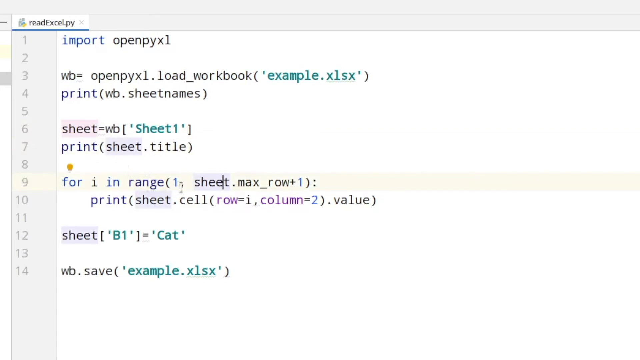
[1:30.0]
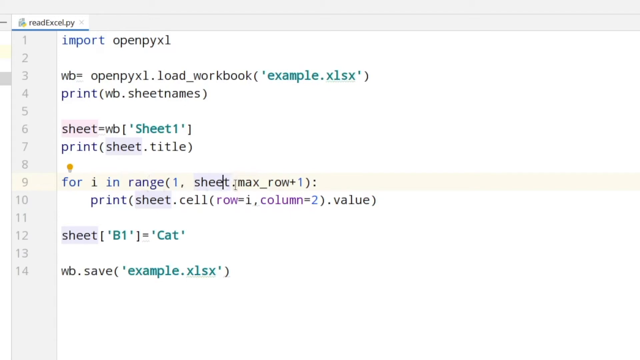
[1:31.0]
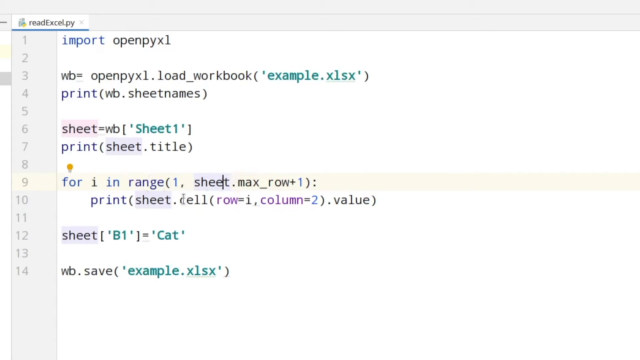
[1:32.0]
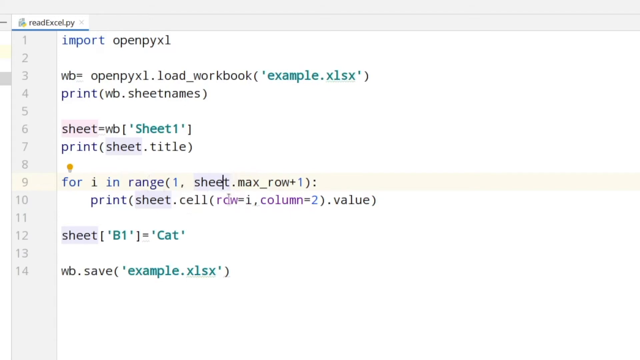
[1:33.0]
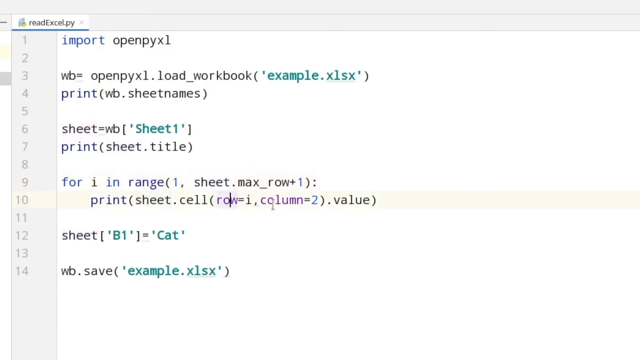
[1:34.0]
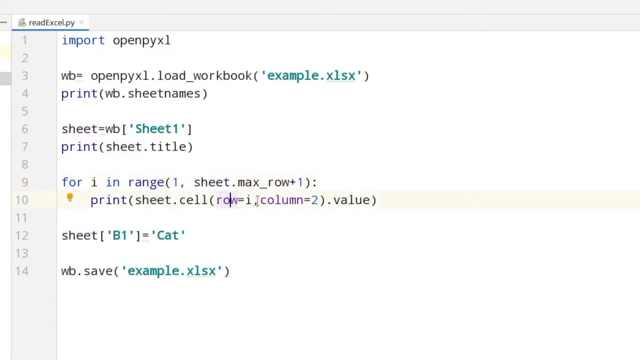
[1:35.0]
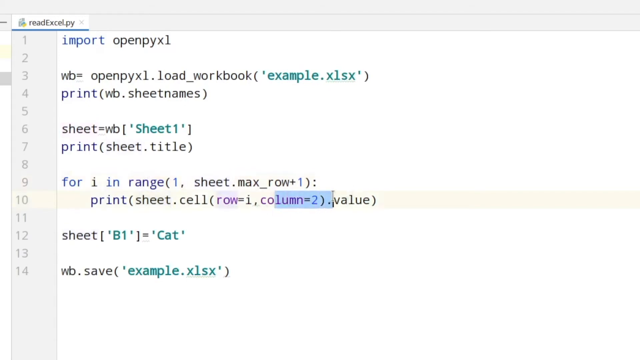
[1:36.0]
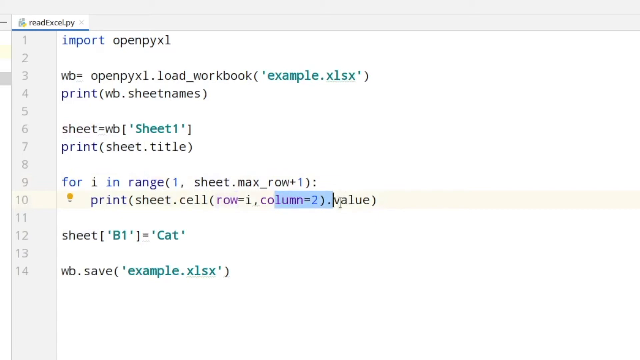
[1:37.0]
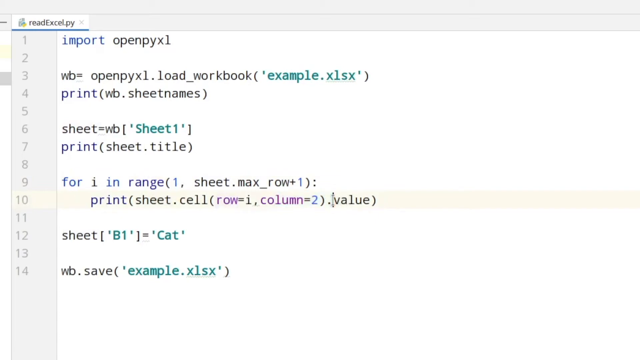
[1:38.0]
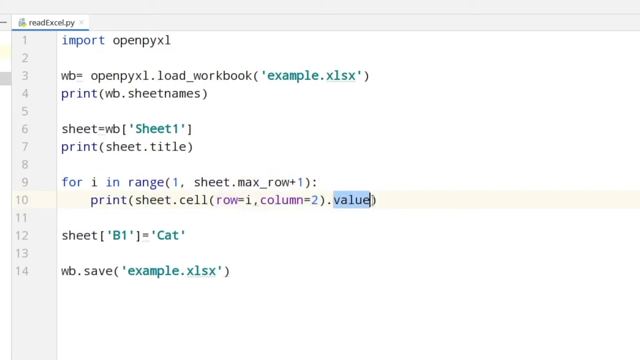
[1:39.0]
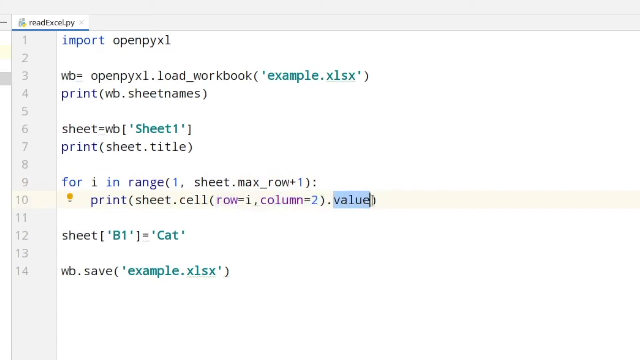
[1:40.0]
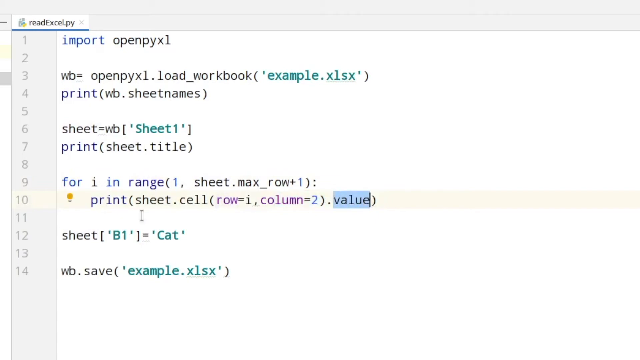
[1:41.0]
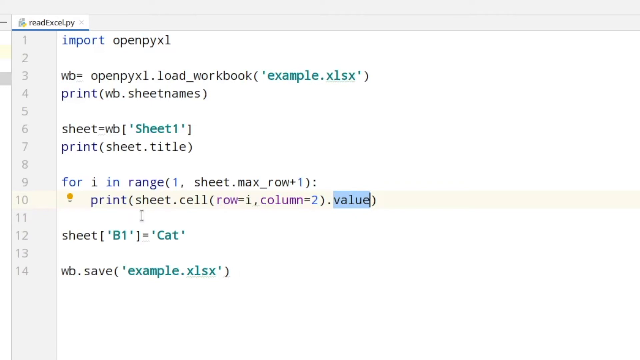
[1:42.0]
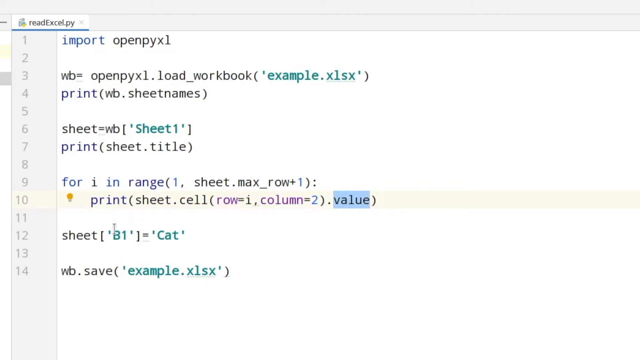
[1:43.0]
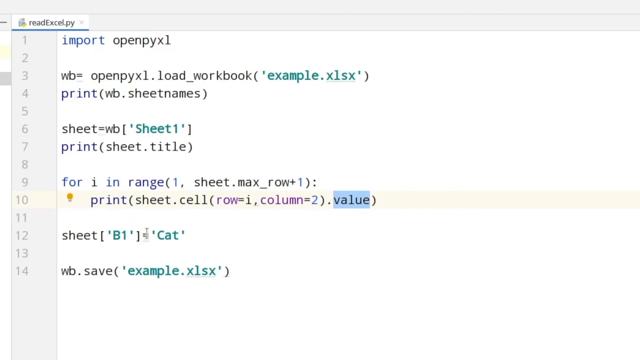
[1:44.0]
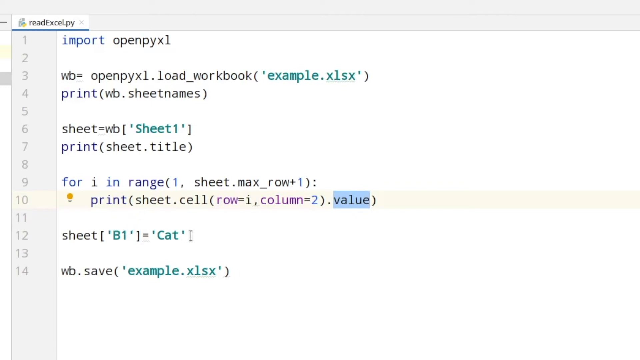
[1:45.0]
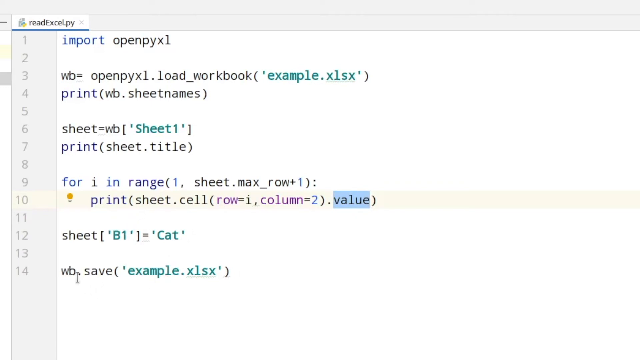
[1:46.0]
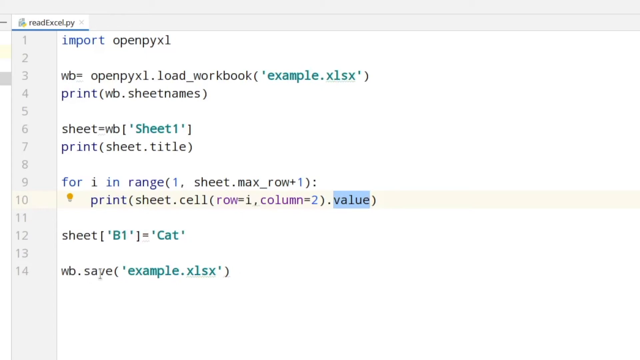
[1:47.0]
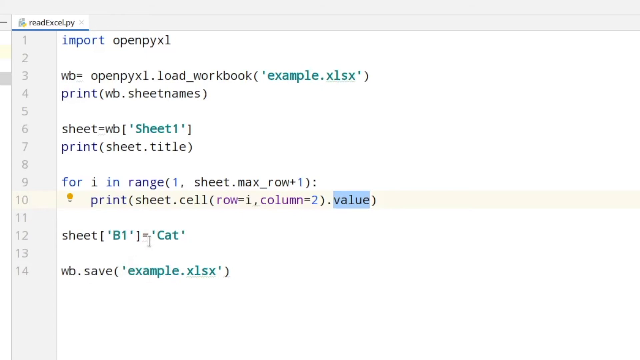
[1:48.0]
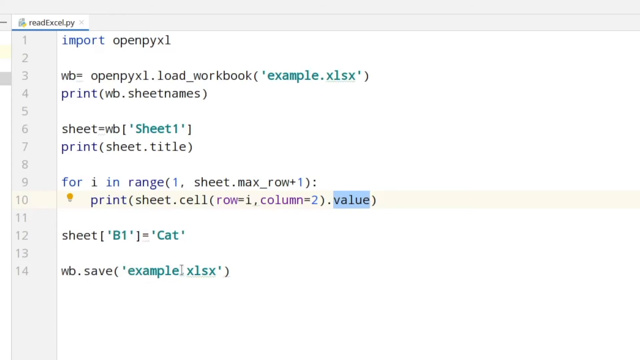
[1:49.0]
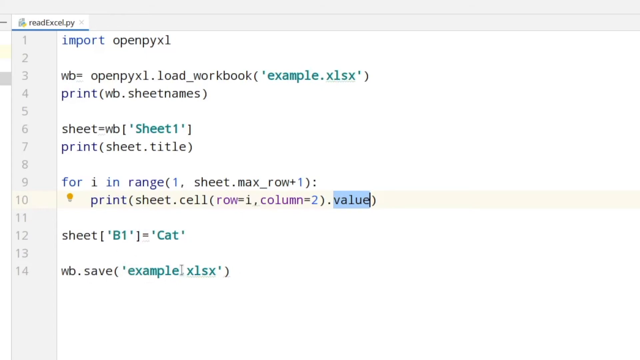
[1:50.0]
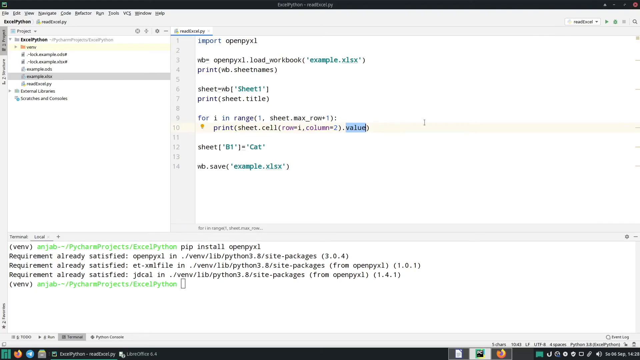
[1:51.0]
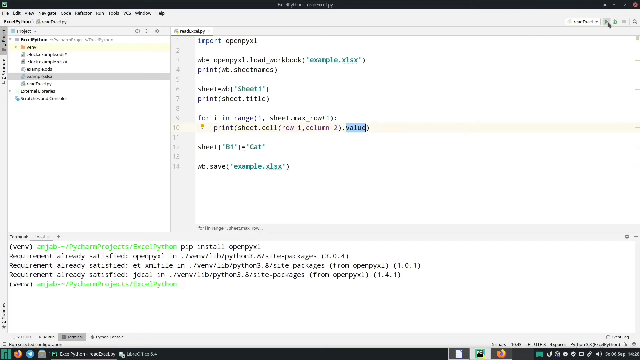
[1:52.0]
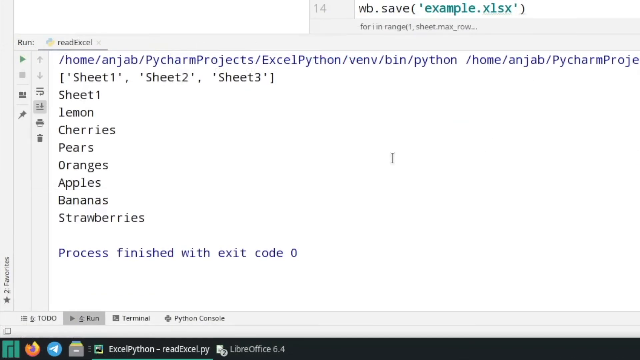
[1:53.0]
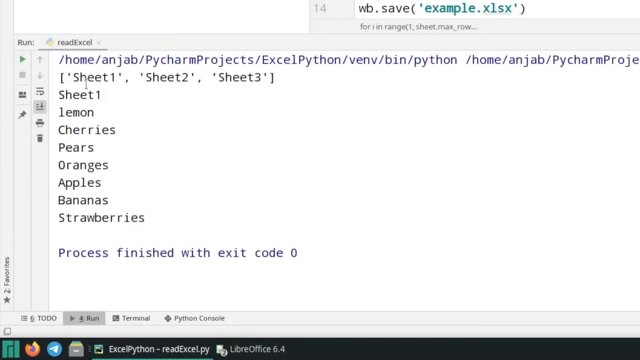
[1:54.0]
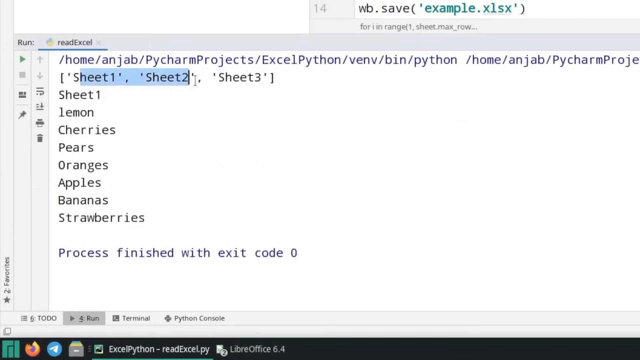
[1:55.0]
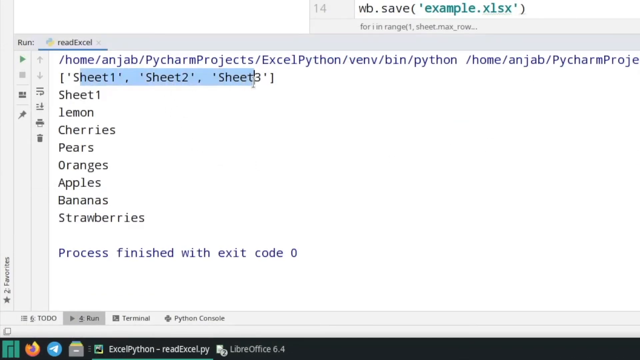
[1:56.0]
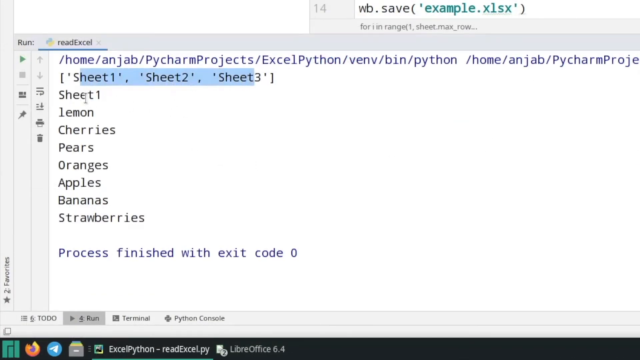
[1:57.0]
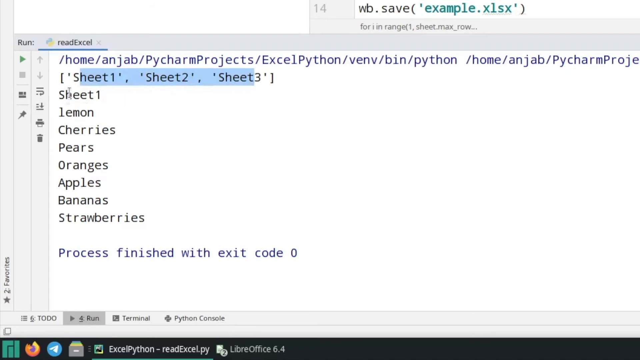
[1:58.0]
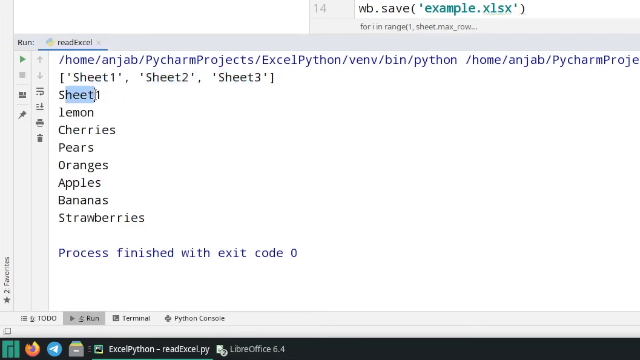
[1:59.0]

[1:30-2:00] A white computer screen shows the numbers 1 through 14 going down the left side. Beside 1 it says "Import openpyxl," and 2 is empty. Beside 3 it says "WB equals openpyxl.LoadWorkbook" with "Example" in parentheses. Beside 4 it says "Print" with "WB Sheet Names" in parentheses. 5 is empty. Beside 6 is the word "Sheet," and beside 7 is the word "Print" with "Sheet.Title" in parentheses. 8 is clear. Beside 9 it says "For i in Ranger" with "Sheet.Max-Row" in parentheses, and underneath it says "Print" with "Sheet.Cell.Value" in parentheses. 11 is empty, 12 is the word "Sheet," 13 is empty, and beside 14 it says "WB.Save" with "Example.XLSX" in parentheses. The video then moves to a couple of other screens filled with words and bits of computer code.